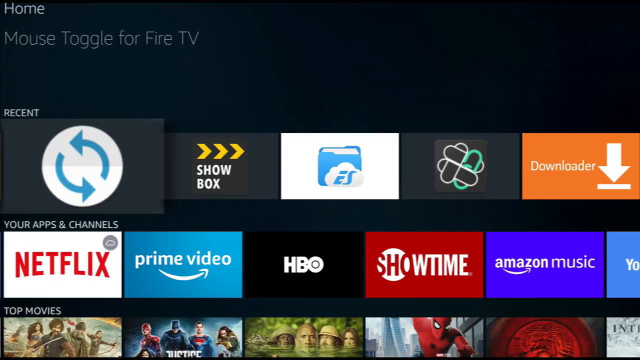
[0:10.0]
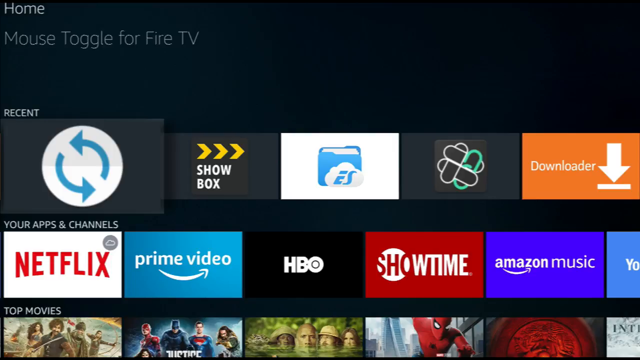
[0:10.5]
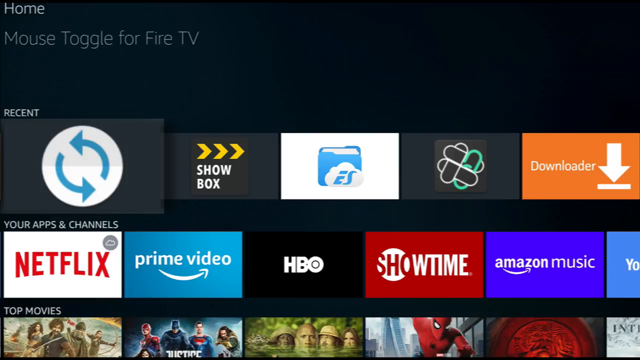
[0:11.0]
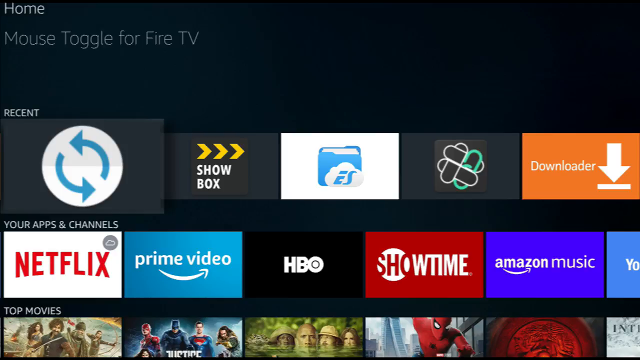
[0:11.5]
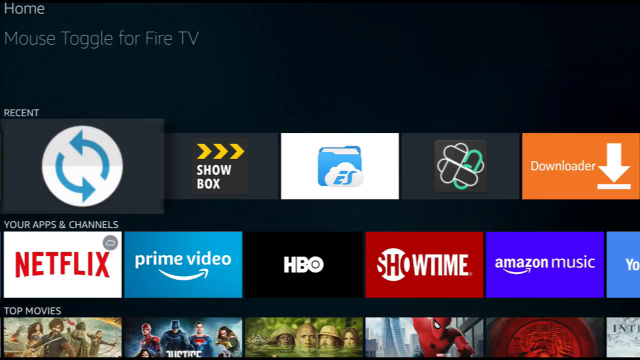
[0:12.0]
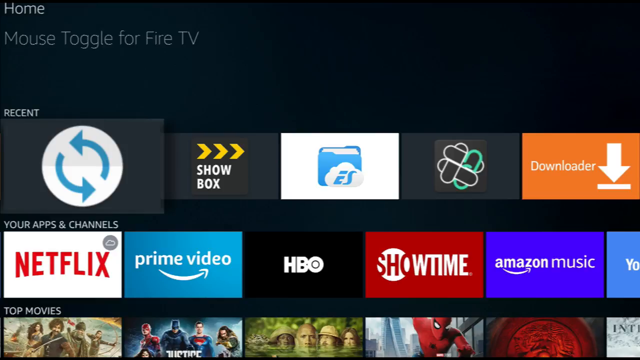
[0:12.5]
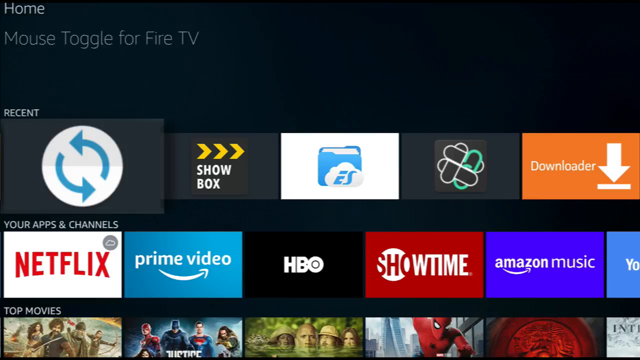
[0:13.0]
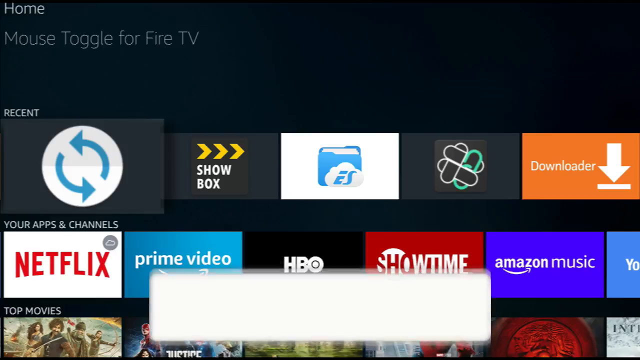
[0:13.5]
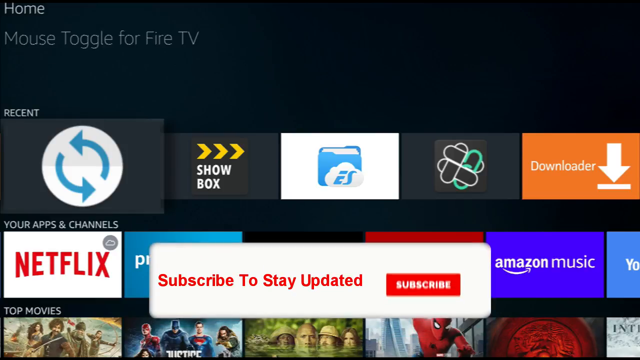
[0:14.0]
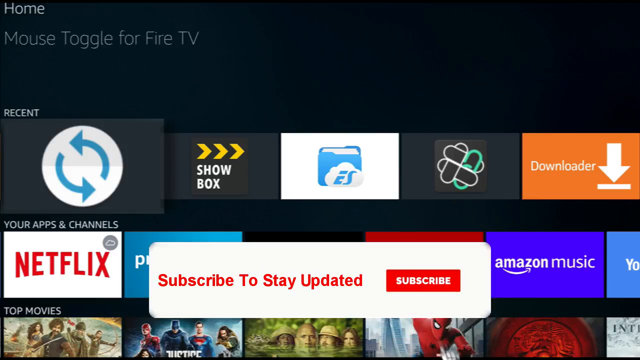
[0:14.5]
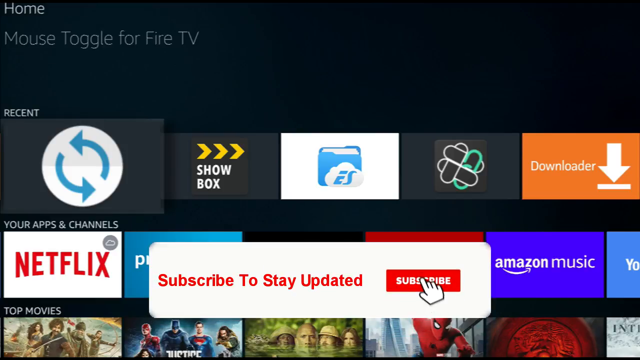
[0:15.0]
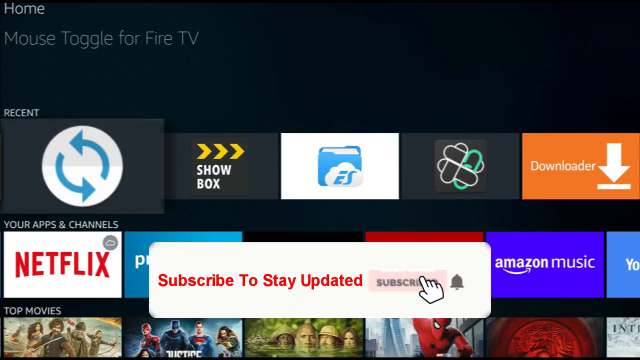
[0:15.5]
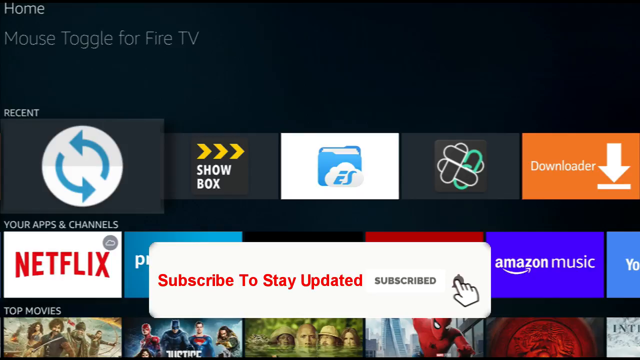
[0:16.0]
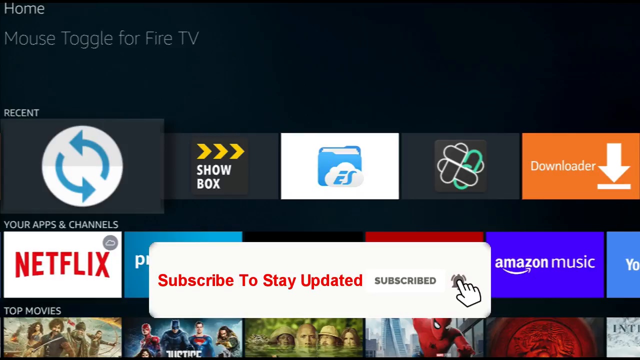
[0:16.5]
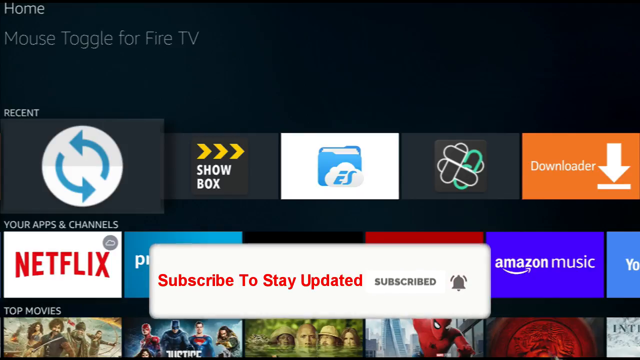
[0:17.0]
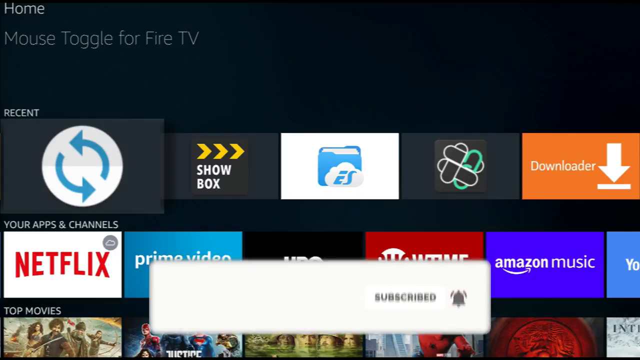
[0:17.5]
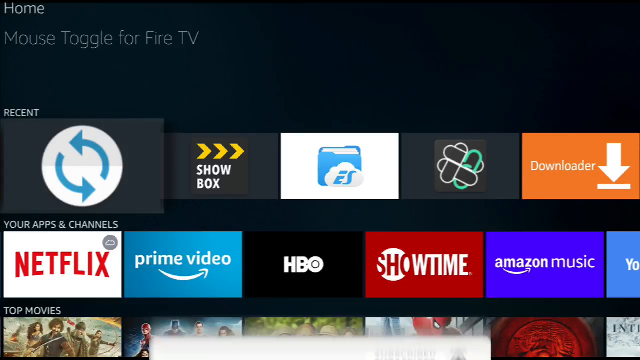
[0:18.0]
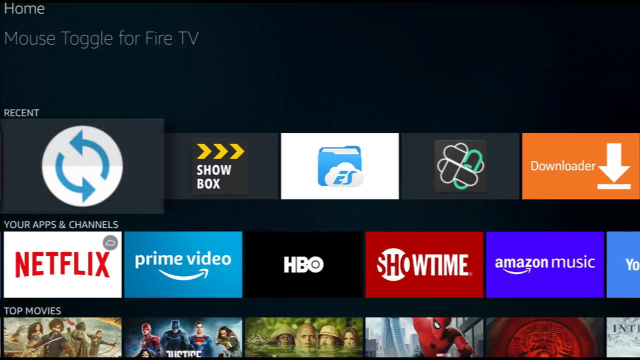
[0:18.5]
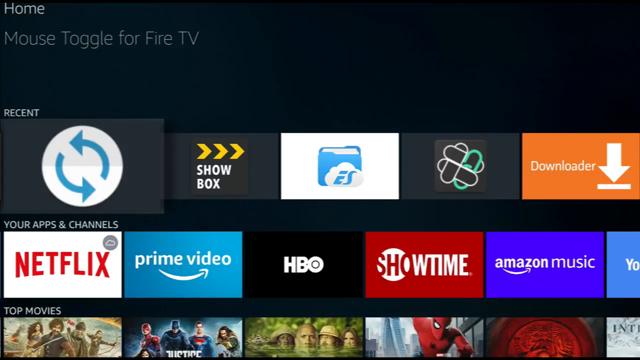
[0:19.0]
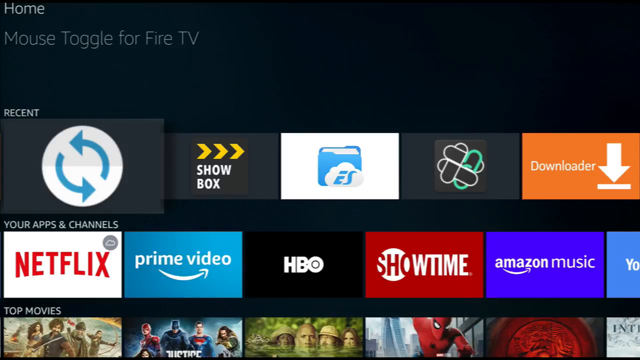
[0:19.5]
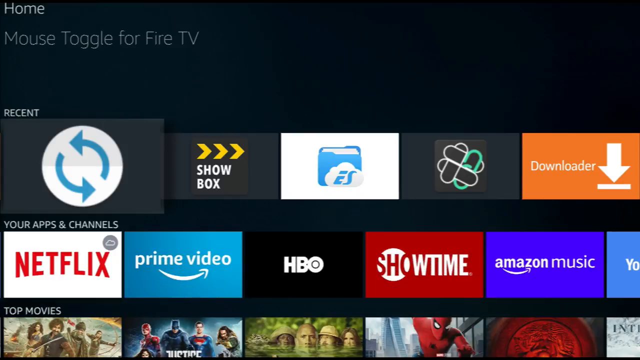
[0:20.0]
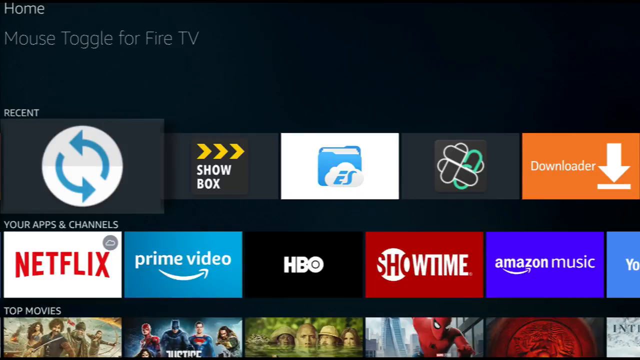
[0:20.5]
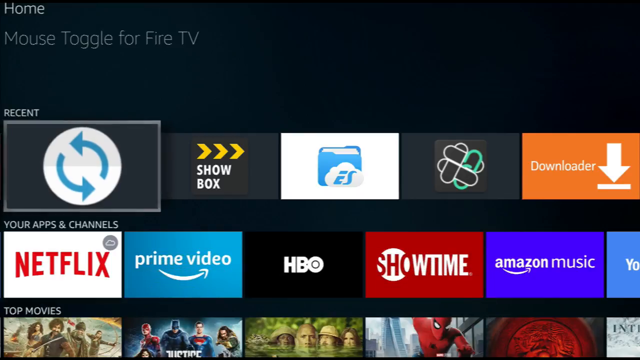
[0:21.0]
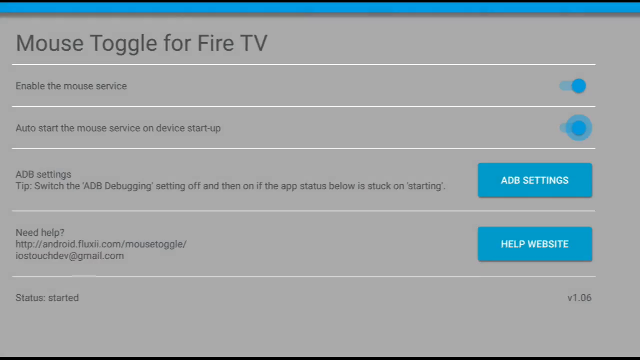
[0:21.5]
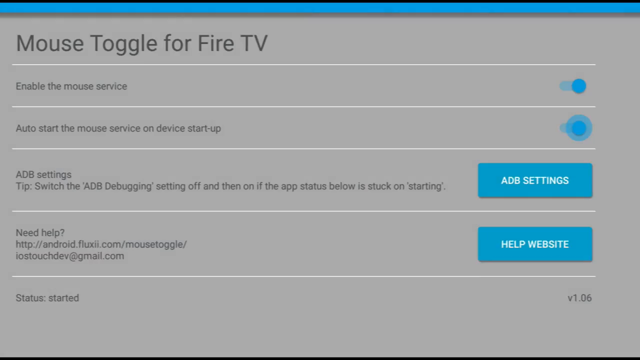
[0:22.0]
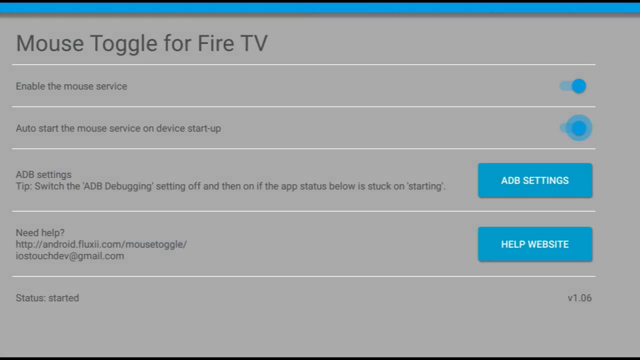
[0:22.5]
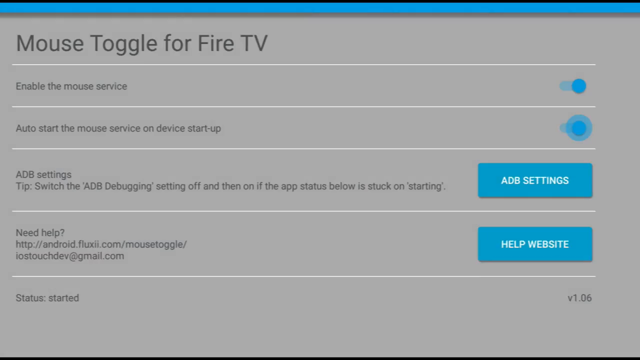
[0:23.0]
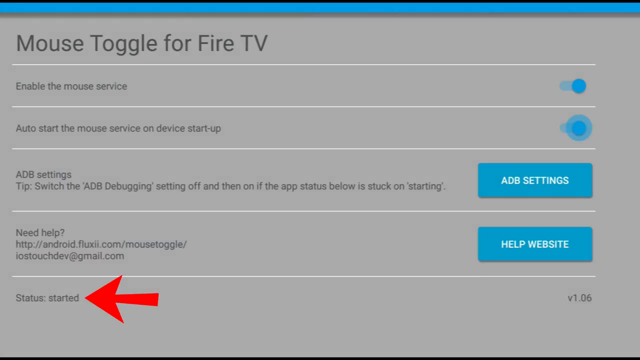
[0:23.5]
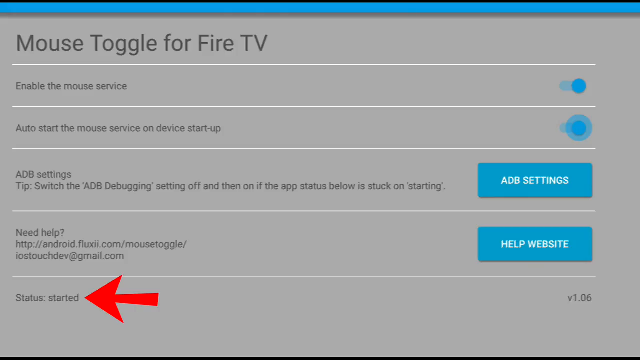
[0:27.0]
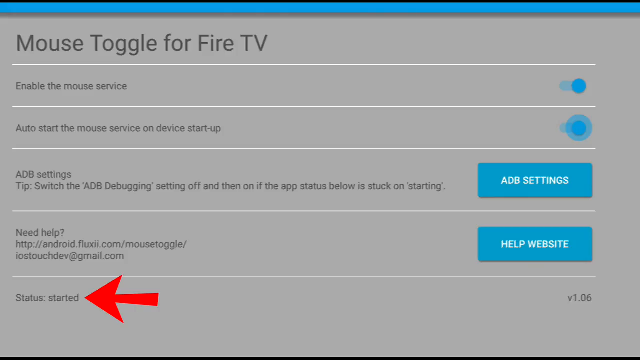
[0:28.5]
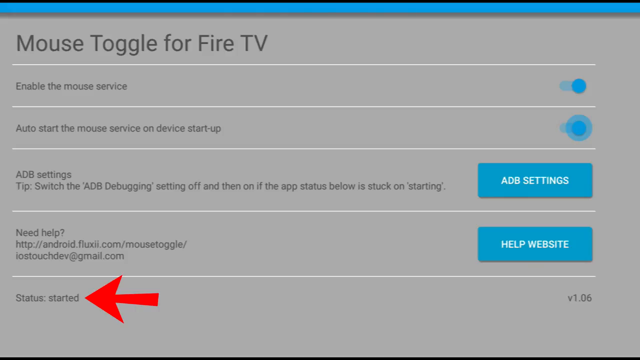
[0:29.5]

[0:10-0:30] The dark black background still shows the recent apps, channels and top movies on the device. A pop-up box with white and red text appears for YouTube, saying "subscribe to stay updated", with an animated mouse clicking the subscribe button and the bell. The user then clicks the first recent channel, a white circle with blue arrows, which opens another screen titled "mouse toggle for fire tv". On this gray and blue background are multiple settings: "enable the mouse service", which is enabled, and "auto start the mouse service on device startup", which is also enabled. There is an "adb setting" section with more information when clicked, and a "need help" section listing websites to visit and emails to message. A red arrow then pops up at the bottom, pointing out and highlighting the status of the app. The colors and text are bland and dull.